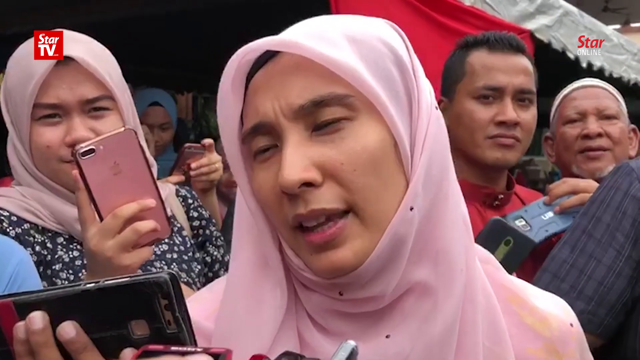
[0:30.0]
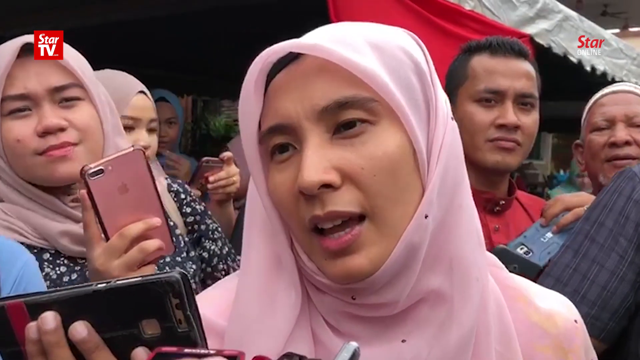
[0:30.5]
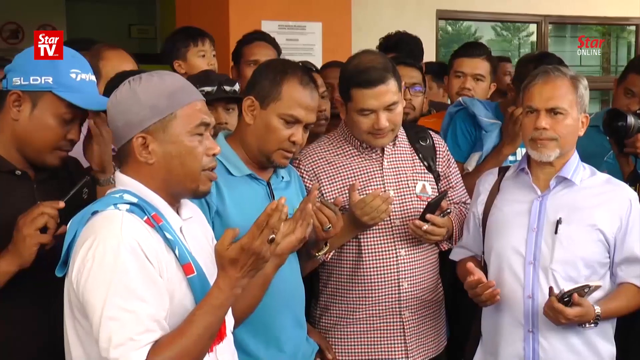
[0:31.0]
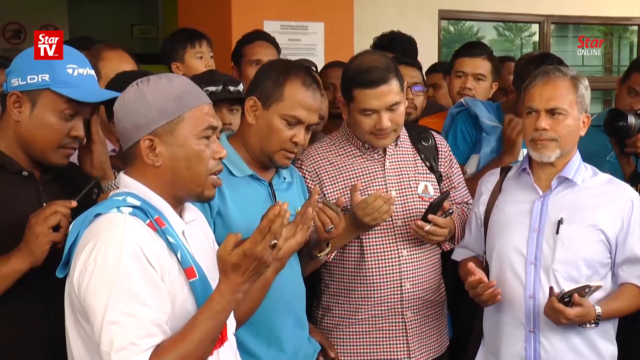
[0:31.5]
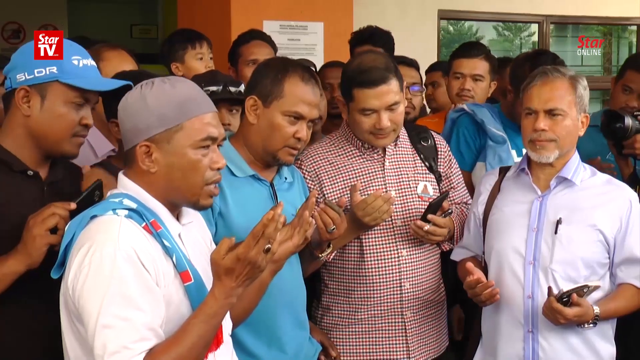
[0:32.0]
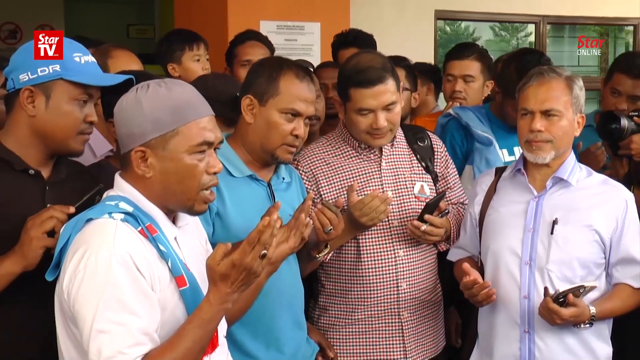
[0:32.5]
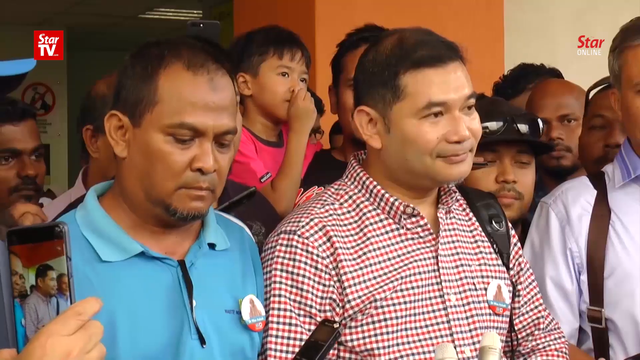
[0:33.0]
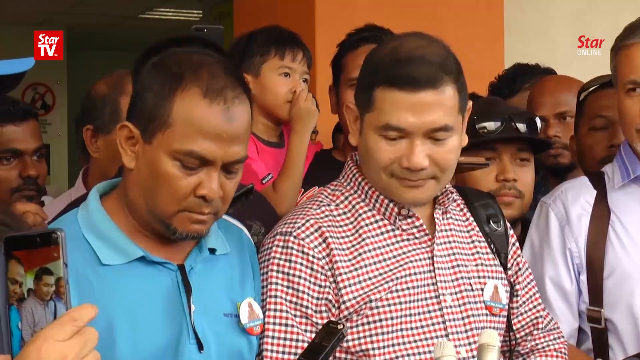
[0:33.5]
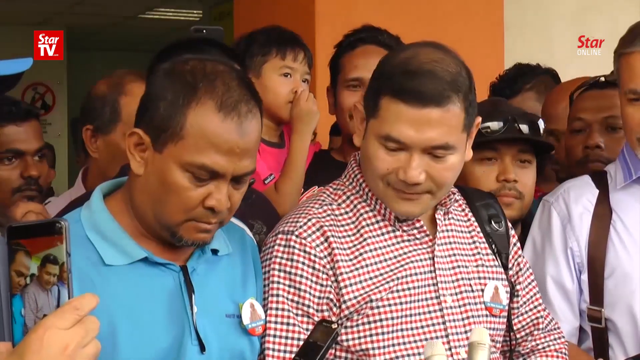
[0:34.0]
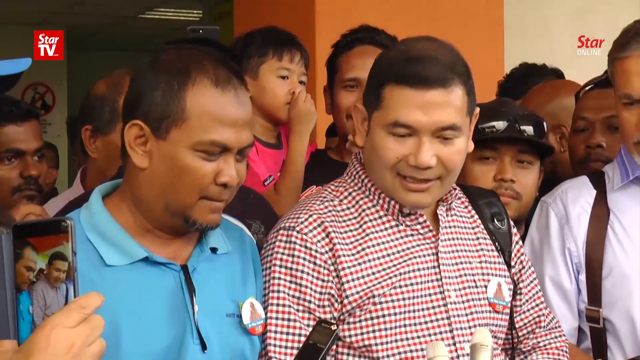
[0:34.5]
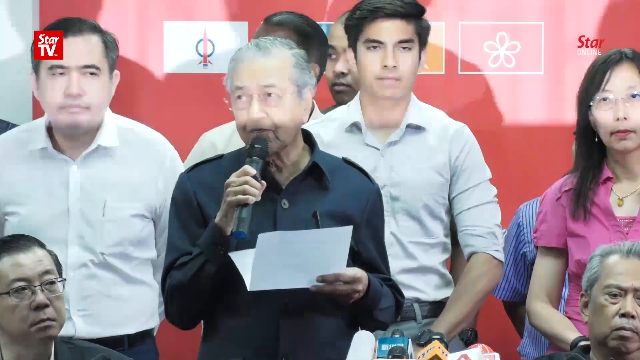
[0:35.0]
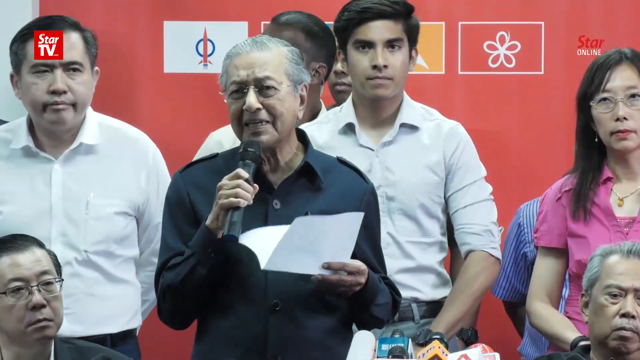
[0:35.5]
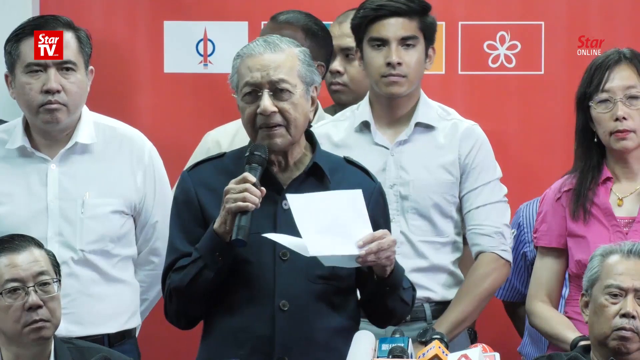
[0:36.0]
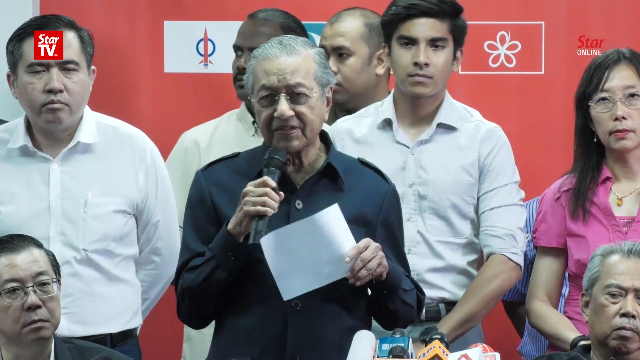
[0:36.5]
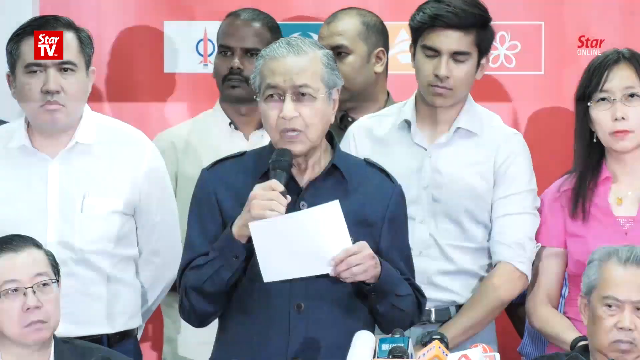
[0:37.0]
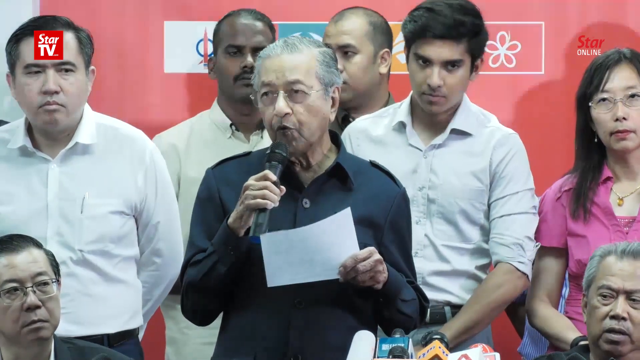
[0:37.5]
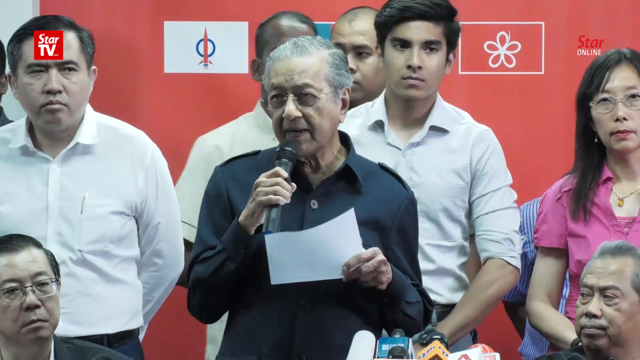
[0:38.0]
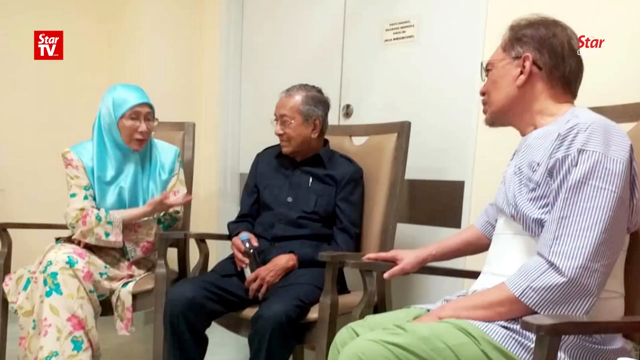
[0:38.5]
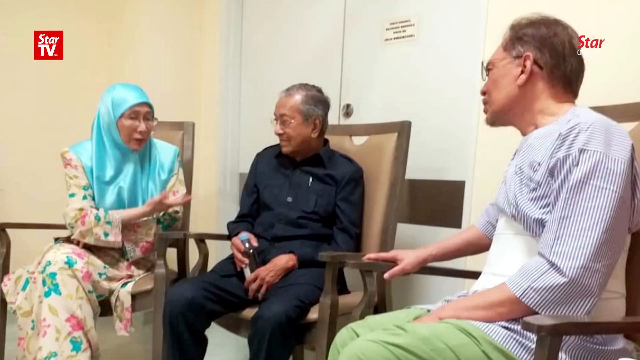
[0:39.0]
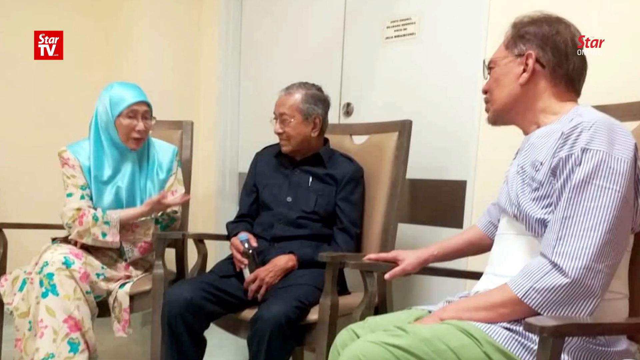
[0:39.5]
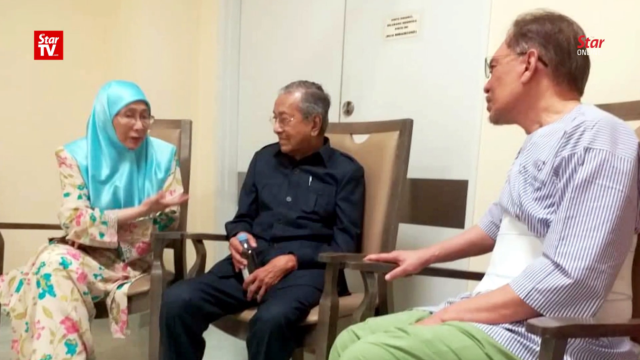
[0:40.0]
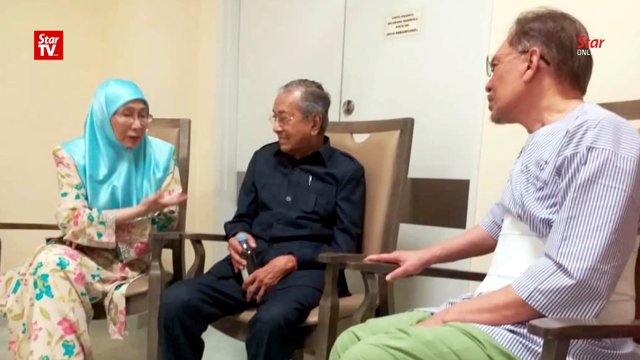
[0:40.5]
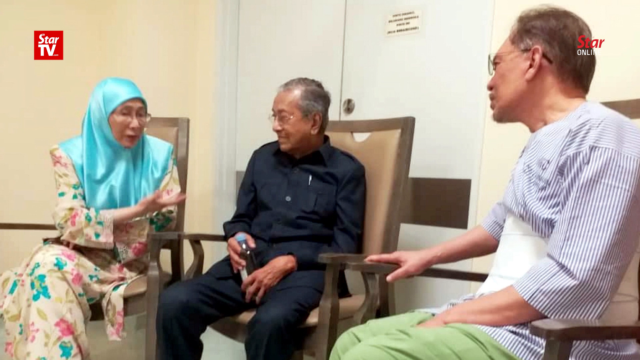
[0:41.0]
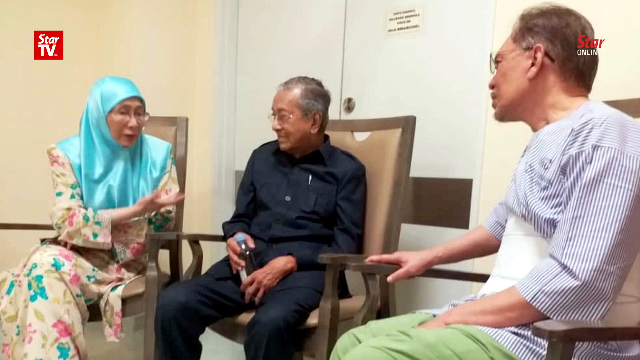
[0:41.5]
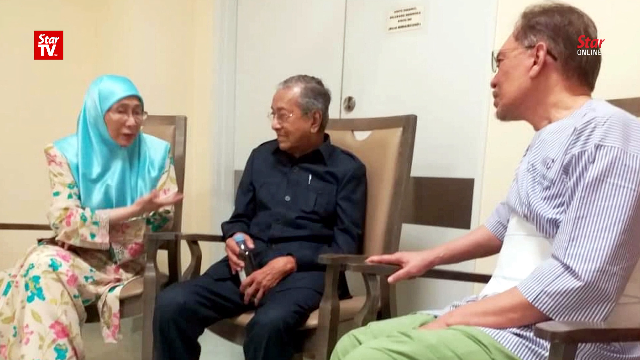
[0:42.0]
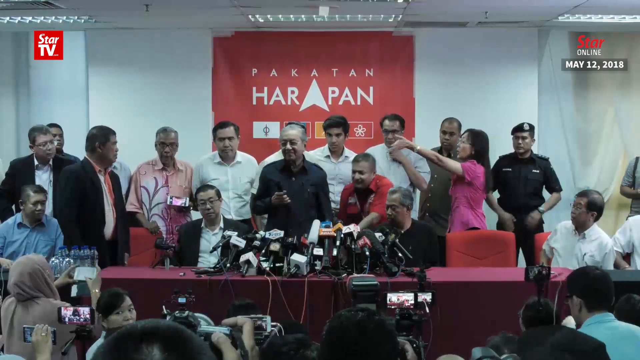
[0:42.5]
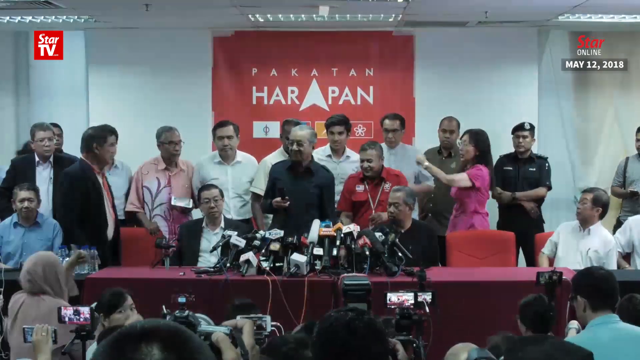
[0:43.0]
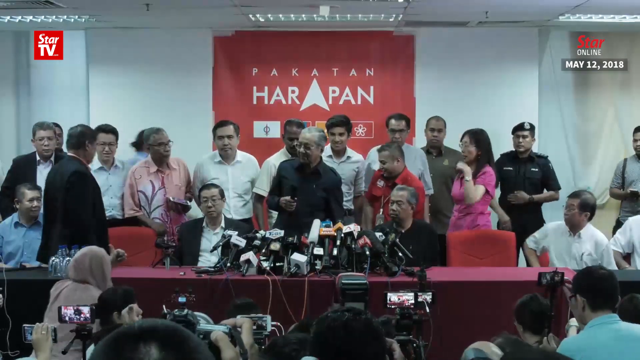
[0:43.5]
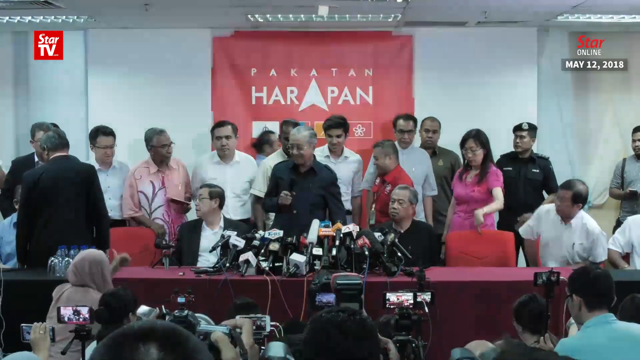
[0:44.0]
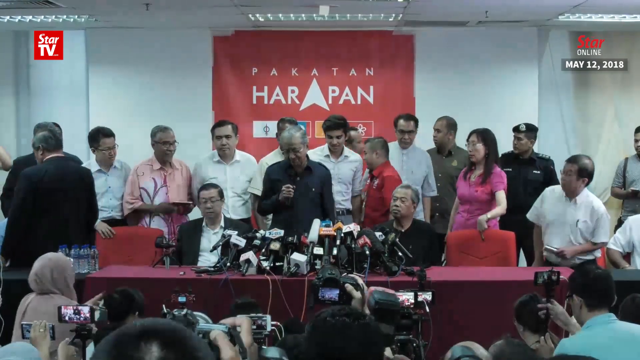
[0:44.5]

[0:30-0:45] The video, from the outlet Star TV, is titled Quit Griping About Cabinet Posts. It opens with a very close-up view of a woman in a light pink hijab, traditional Middle Eastern wear, speaking with reporters, with a crowd of people visible behind her. A graphic appears on screen with black letters reading "GE", a square with a red X in the middle, and then the number "14"; it appears to be an election-type video. The footage alternates between the woman walking down a village street surrounded by many other women, her speaking with reporters, and her getting food from a buffet line in what looks to be a tent. The woman appears to be running for a government position in a different country, and the video seems to be a profile of her for that year's upcoming election.